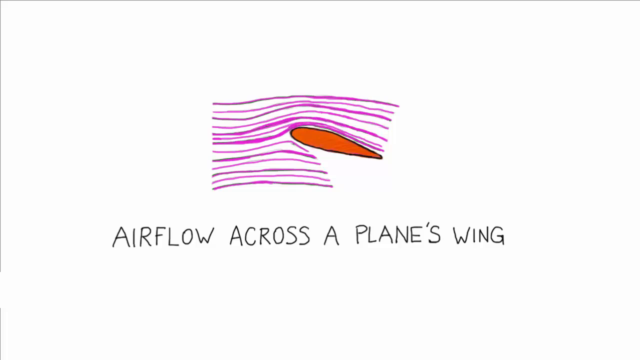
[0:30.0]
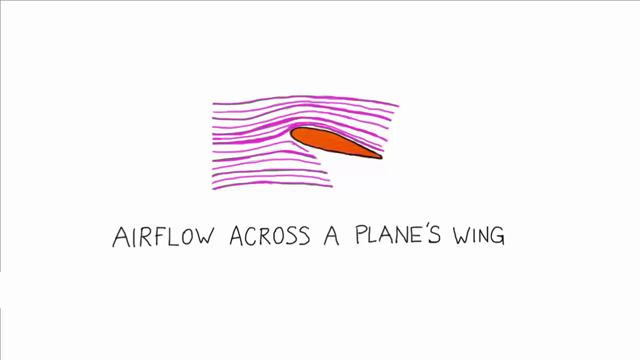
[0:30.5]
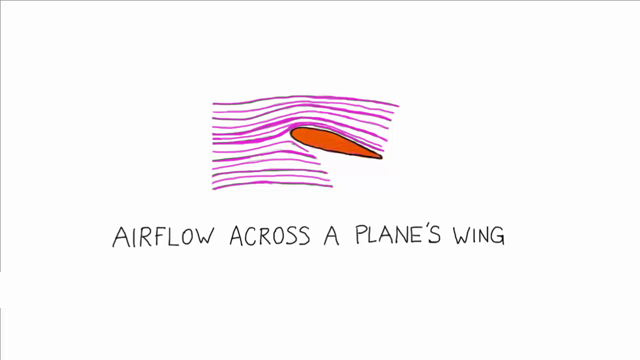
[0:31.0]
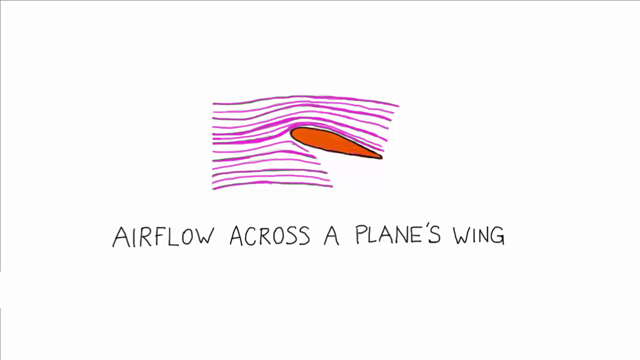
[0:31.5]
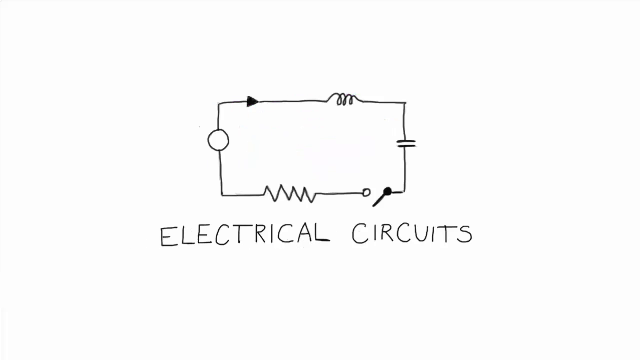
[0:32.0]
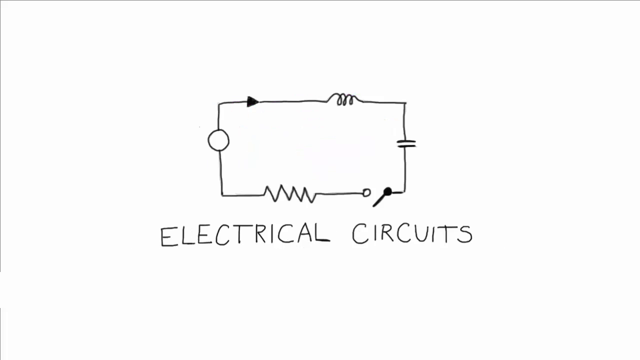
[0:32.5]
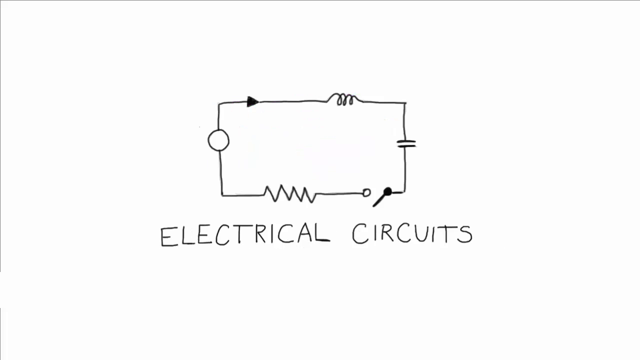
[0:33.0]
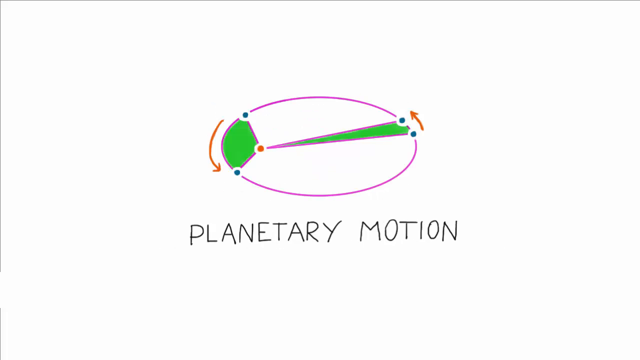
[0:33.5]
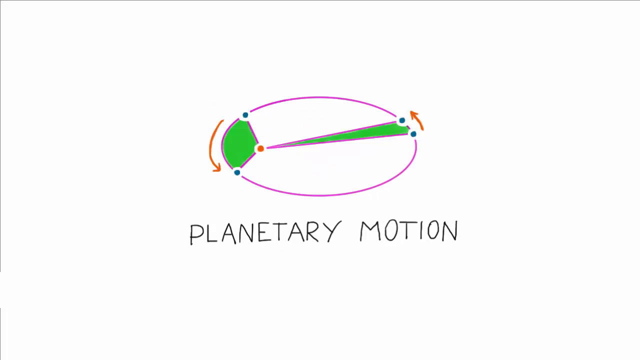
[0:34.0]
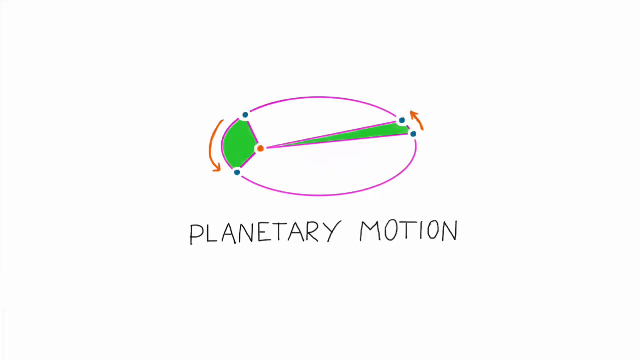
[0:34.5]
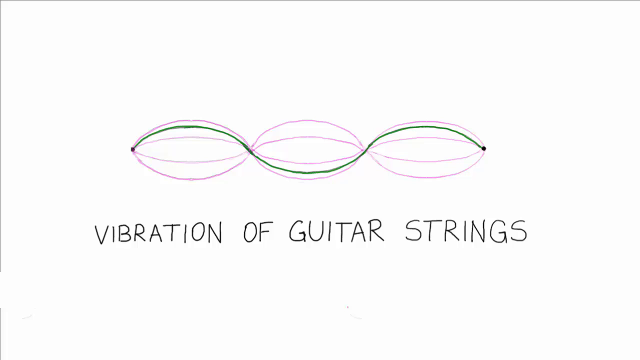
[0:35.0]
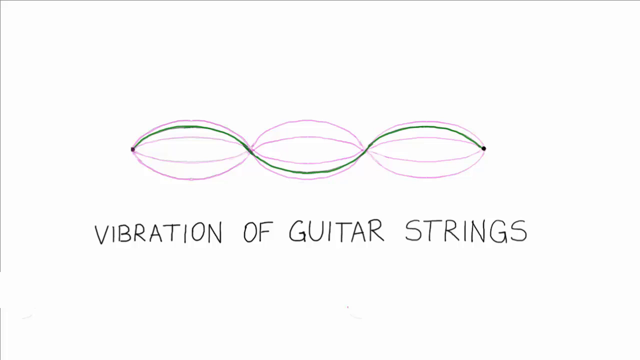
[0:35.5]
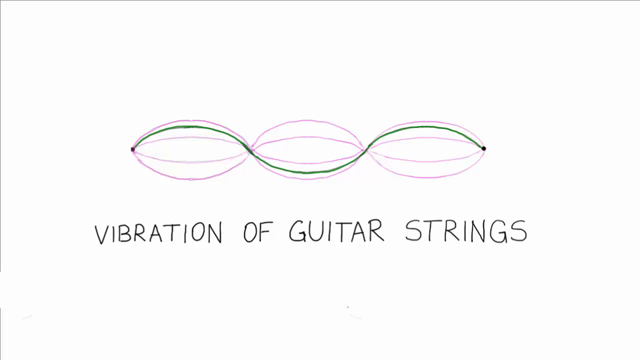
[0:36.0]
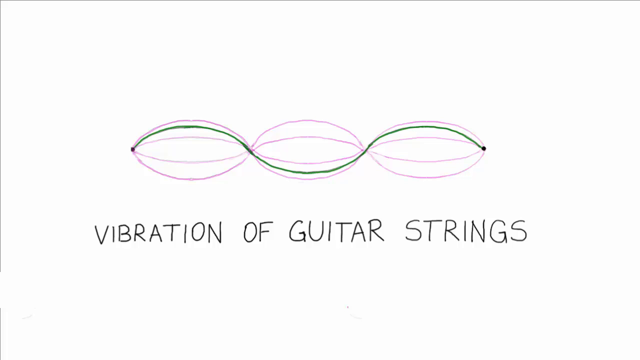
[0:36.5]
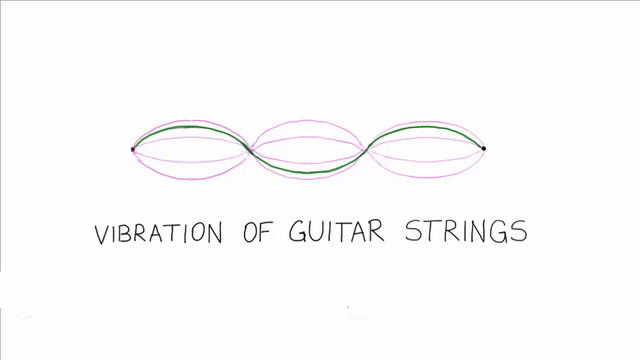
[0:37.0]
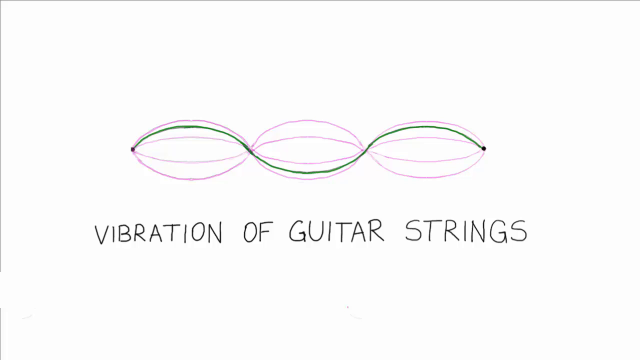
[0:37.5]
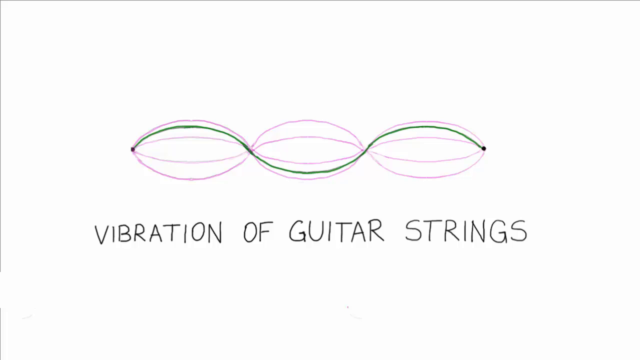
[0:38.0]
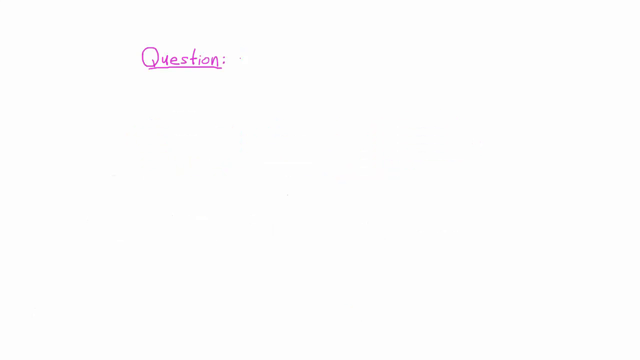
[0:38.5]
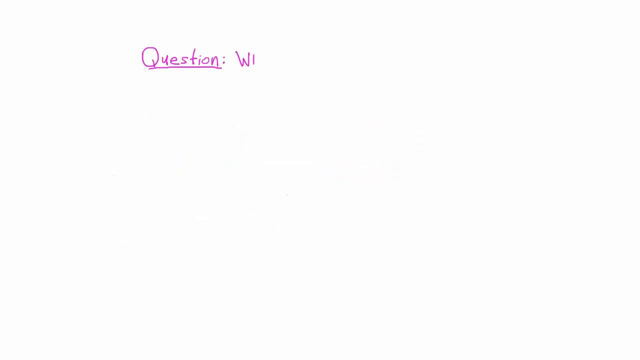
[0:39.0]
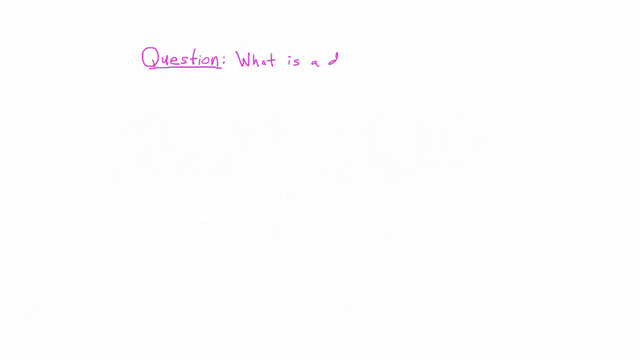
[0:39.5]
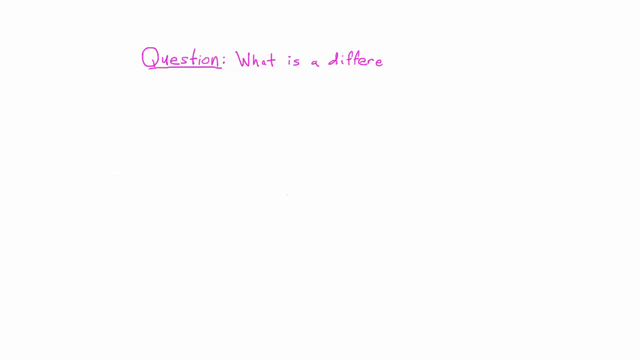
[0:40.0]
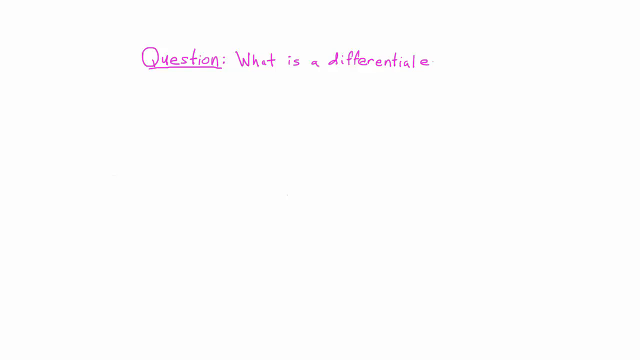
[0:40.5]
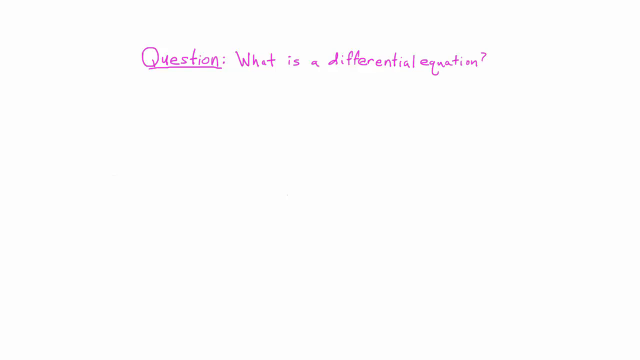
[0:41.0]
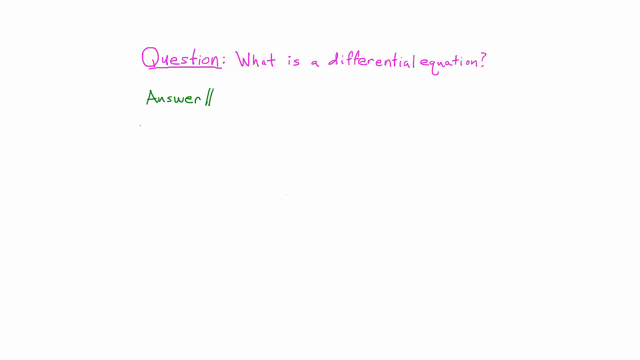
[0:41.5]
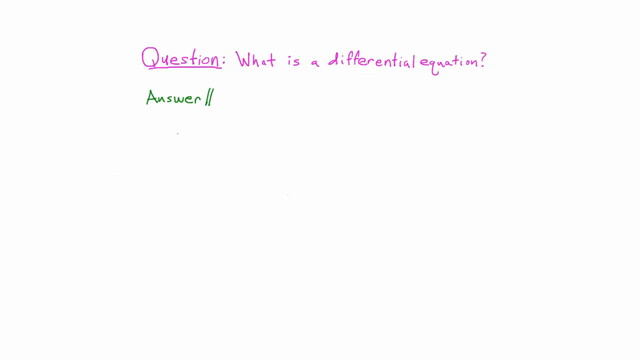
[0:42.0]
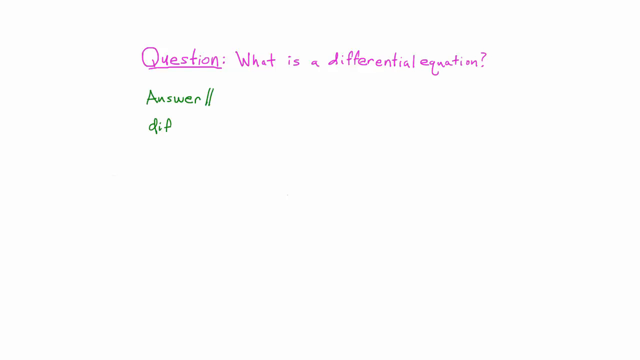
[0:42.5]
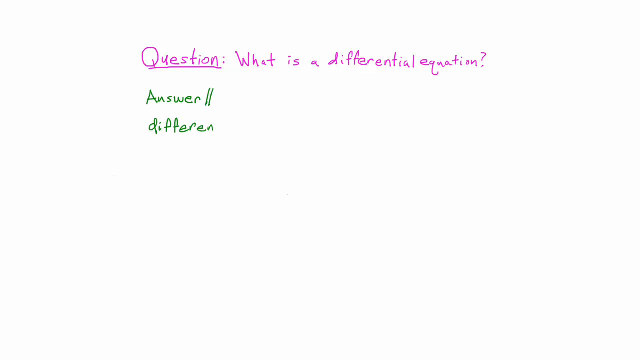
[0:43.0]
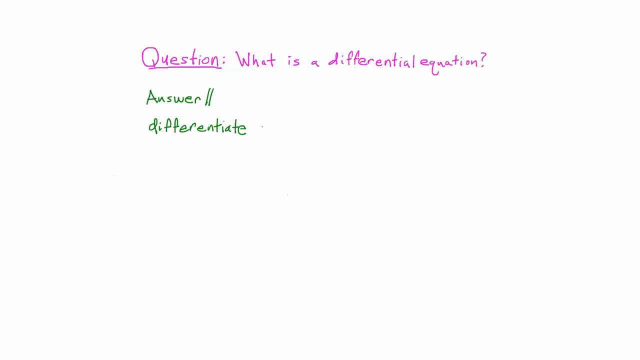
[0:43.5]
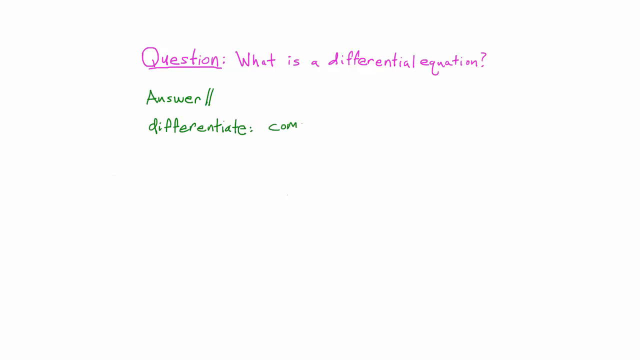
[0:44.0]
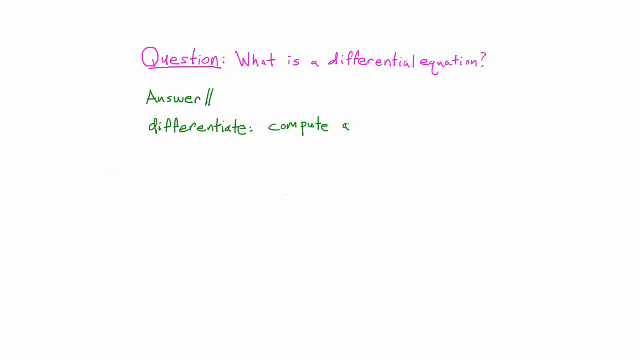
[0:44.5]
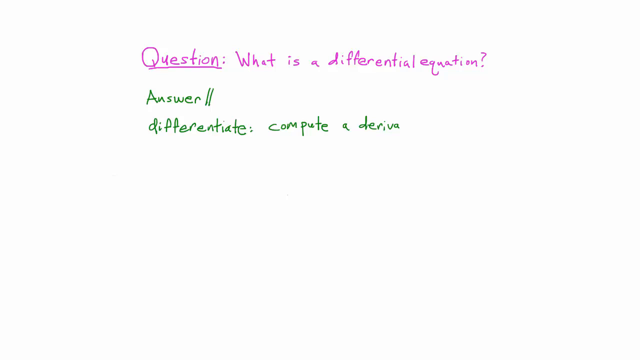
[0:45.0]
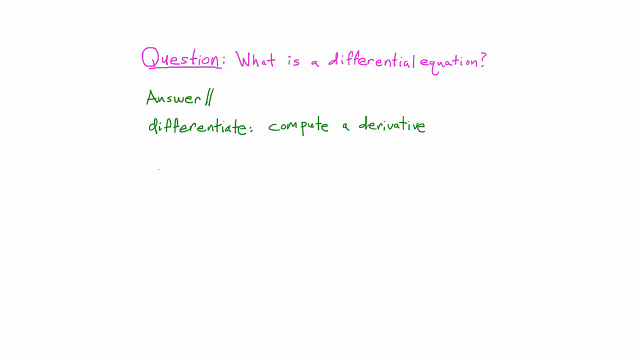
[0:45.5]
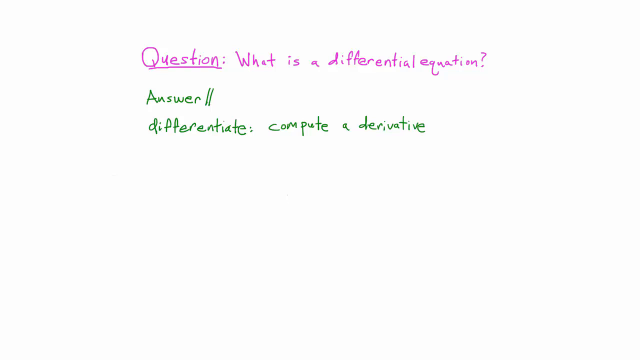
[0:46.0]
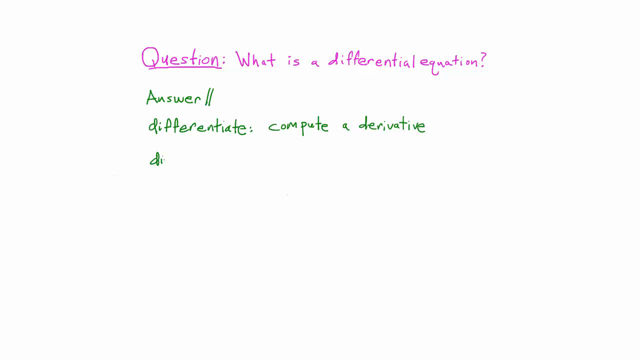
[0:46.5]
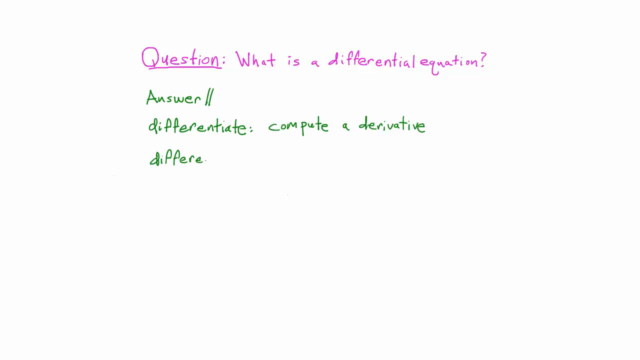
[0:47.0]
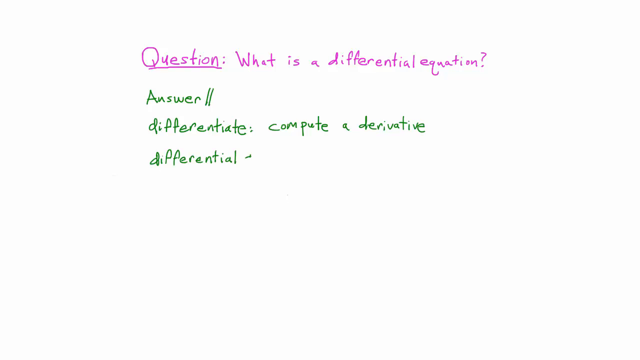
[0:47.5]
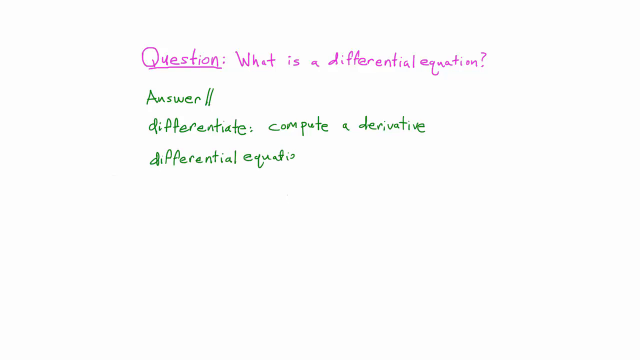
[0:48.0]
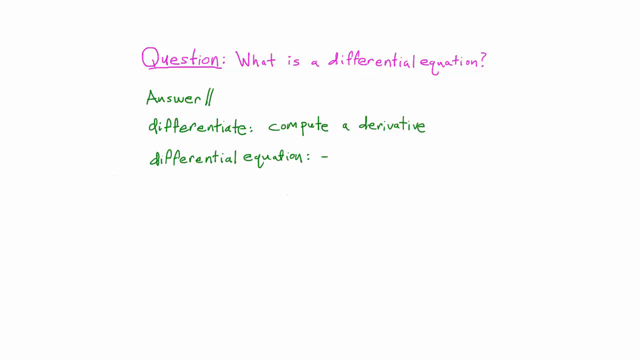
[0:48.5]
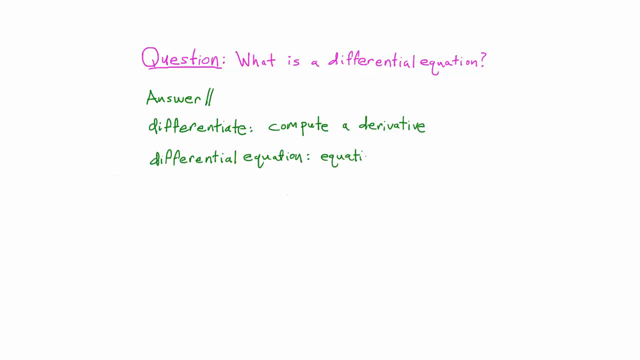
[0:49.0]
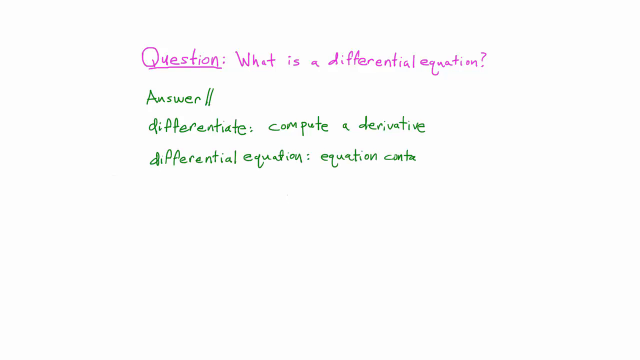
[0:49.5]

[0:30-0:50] Near the bottom, about two inches up, the text reads "airflow across the plane's wing." Purple lines go across. At the midway point on the right side, a little red comes up about halfway and then drops back down, almost like a teardrop, with purple under it going only halfway over from left to right. Then "electrical circuits" appears with a drawing that includes something like a square in the top left, half of an arrow, a little squiggle toward the right, two lines with a separation on the right side, and, down from the right corner, a black dot with a line going down. Next comes "planetary motion": a purple circle with green coming in on the left side, almost like a triangle, stretching over to the right, and red arrows on both sides, pointing down on the left side and up on the right side. Then "vibration of guitar strings" appears, with lines going up, down and up that make sort of walnut shapes, two purple lines in the center, and one green line zigzagging across. Next, "question" is written in purple and underlined at the top, and out from it "what is a differential equation?" Below that is "answer," and below that "differentiate compute a derivative."